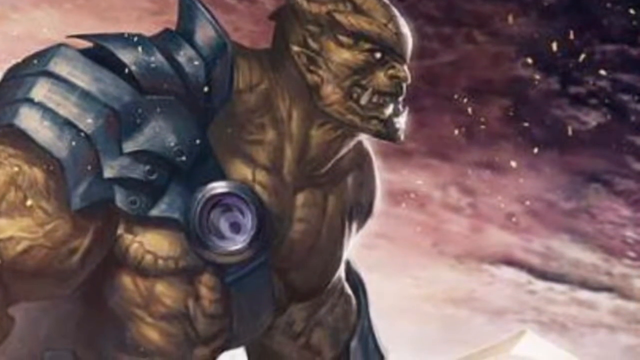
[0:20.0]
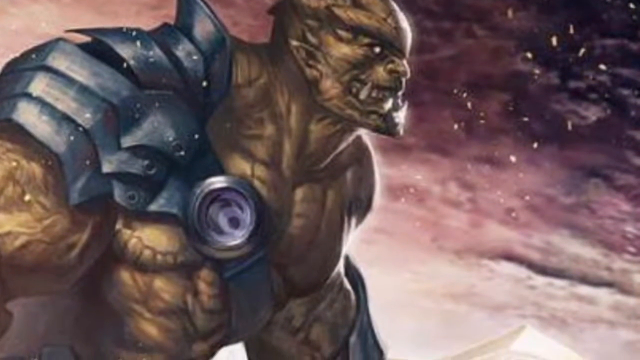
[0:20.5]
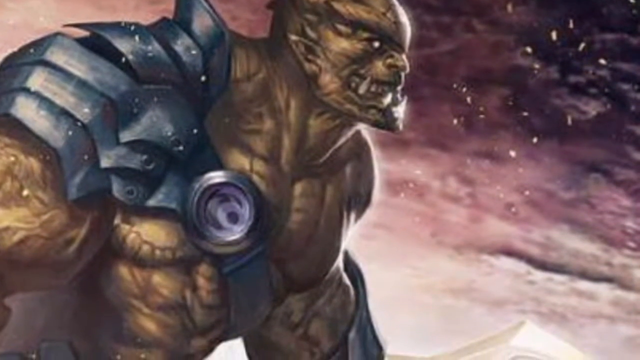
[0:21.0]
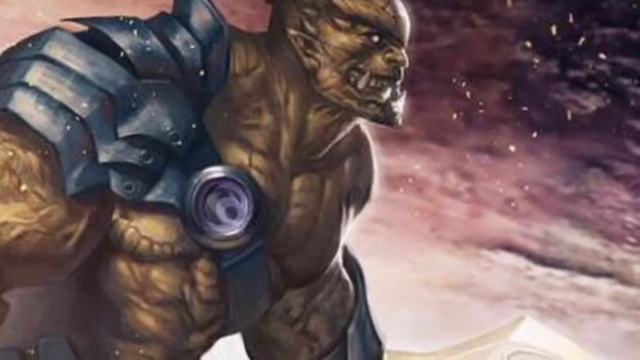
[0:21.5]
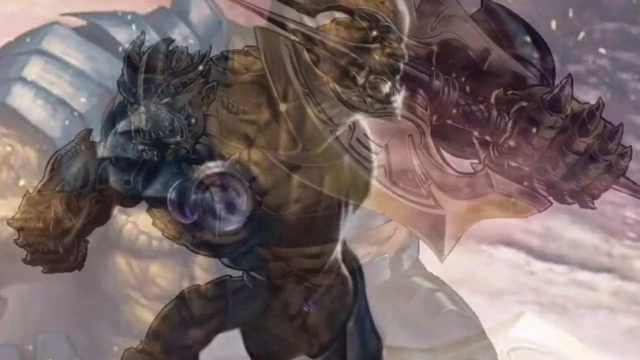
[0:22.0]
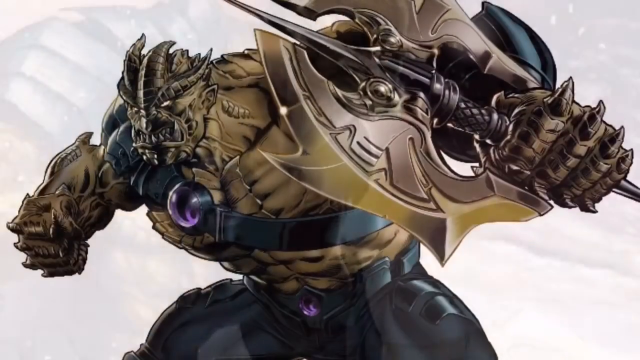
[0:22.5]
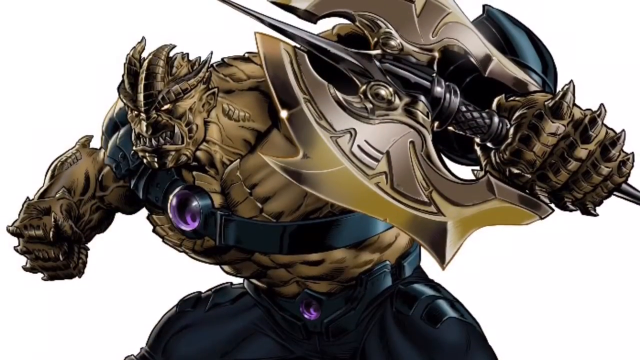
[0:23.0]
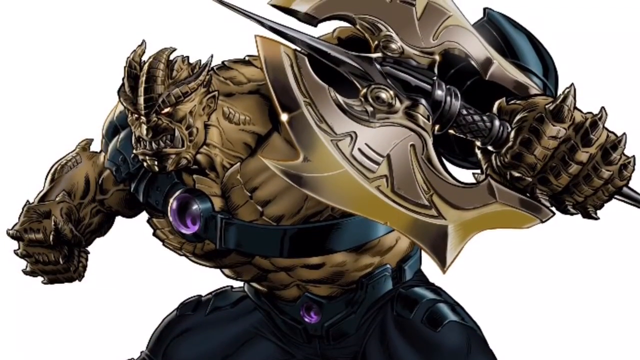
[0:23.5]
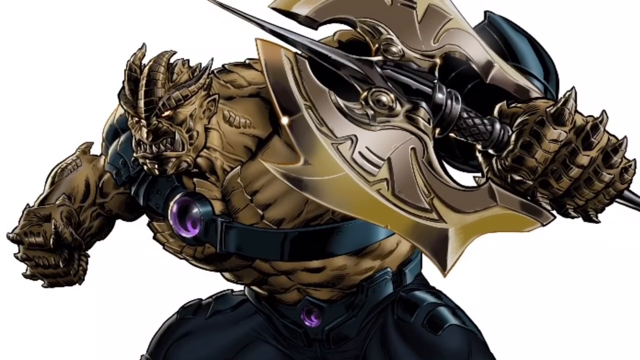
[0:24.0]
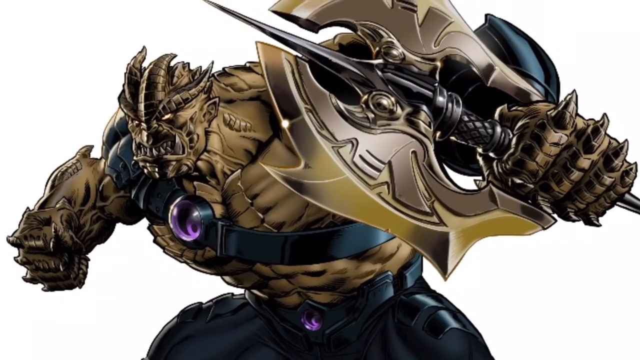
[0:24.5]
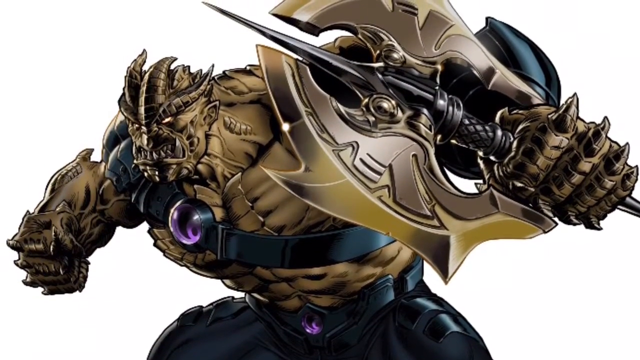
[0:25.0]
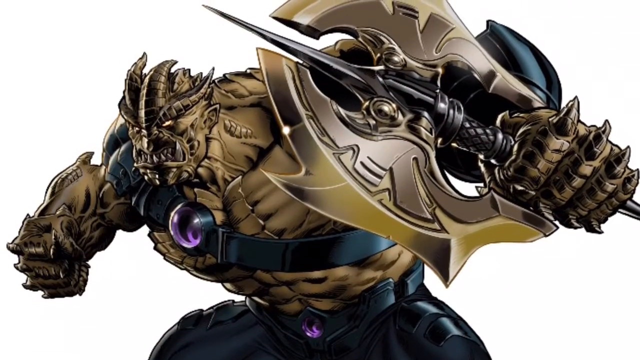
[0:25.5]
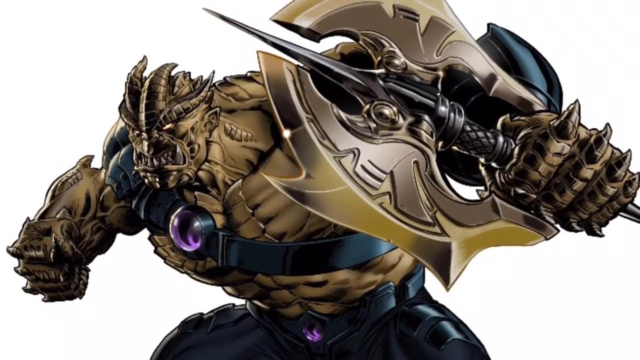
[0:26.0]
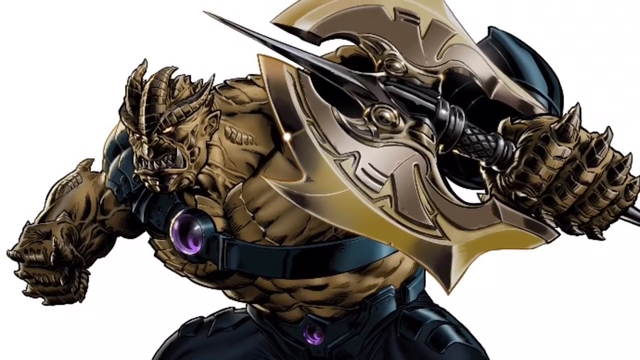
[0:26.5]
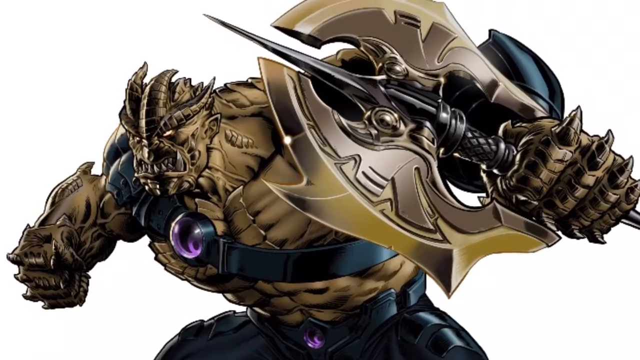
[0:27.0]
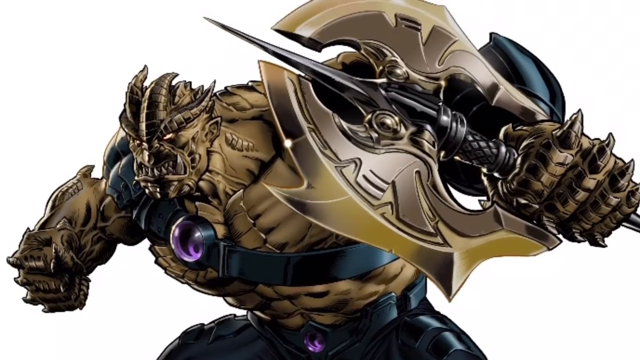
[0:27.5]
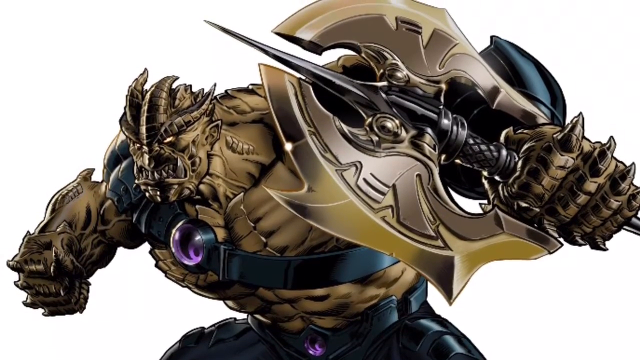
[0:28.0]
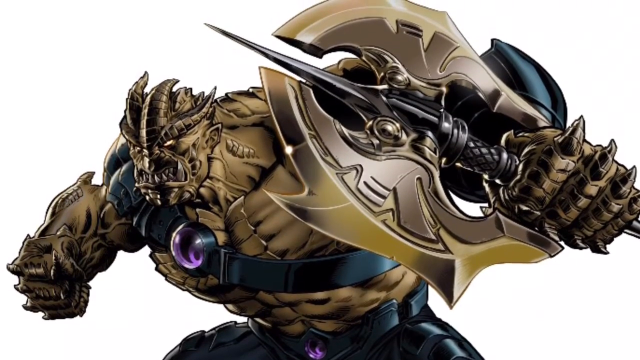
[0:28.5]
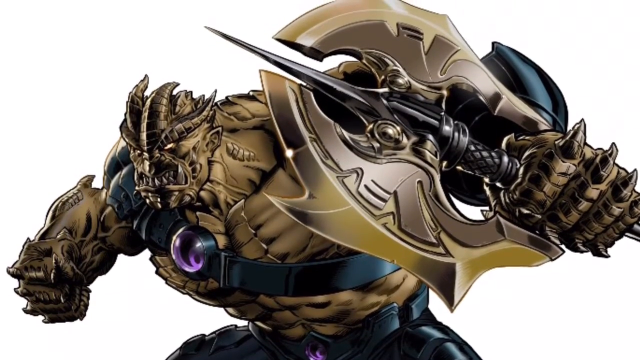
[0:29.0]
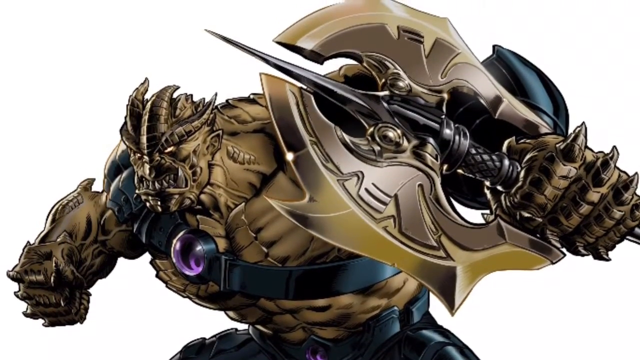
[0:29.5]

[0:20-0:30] The vicious-looking evil monster stares toward the right. The view slowly pans down, then moves to another picture of the same monster that is much crisper and more detailed, far less hazy than the one before. Here he faces toward the bottom left, his eyes somewhat illuminated. His left hand is in a fist pointing down toward the left, and his right arm is held up just a little above his head, his hand holding a weapon that is partly an axe and partly a spear. He has very long, very sharp black claws, what seem to be scales all over his fingers, and some scales on his head as well. He has a really mad look on his face; his teeth are closed but his lips are open, showing his very sharp teeth. A band around his chest holds on the shoulder piece, and the band has a purple orb in its center.